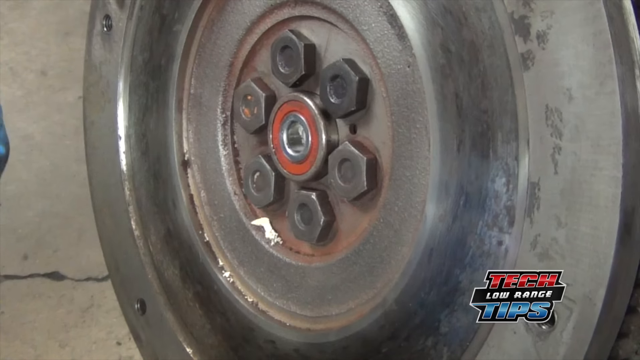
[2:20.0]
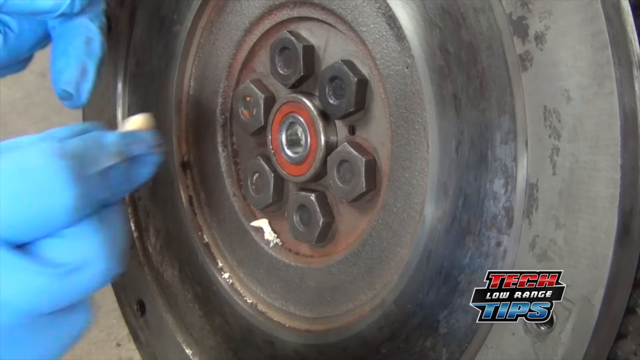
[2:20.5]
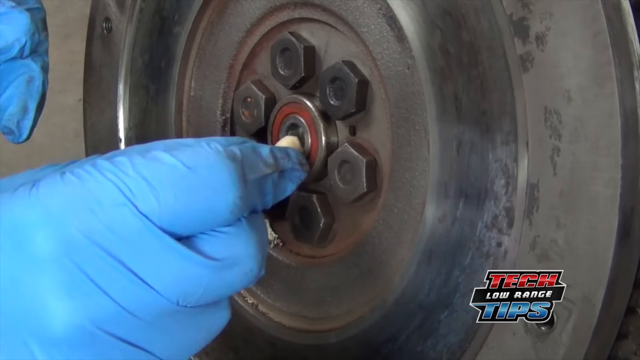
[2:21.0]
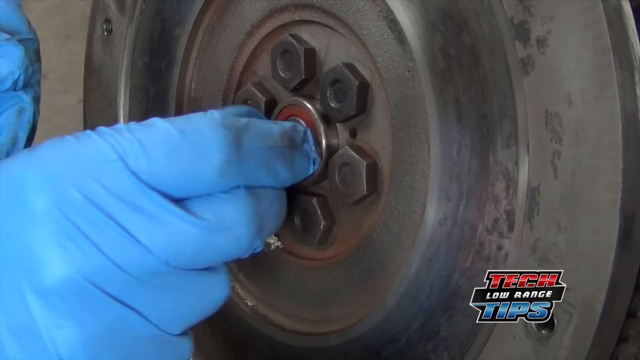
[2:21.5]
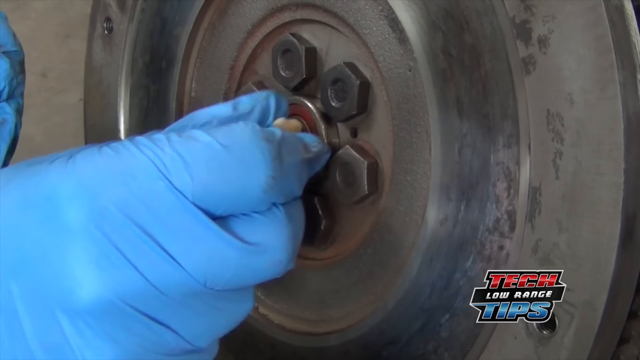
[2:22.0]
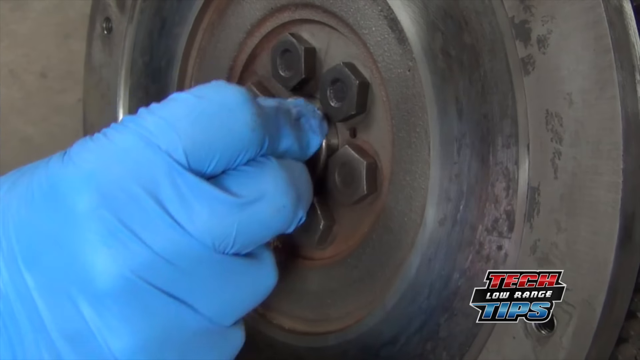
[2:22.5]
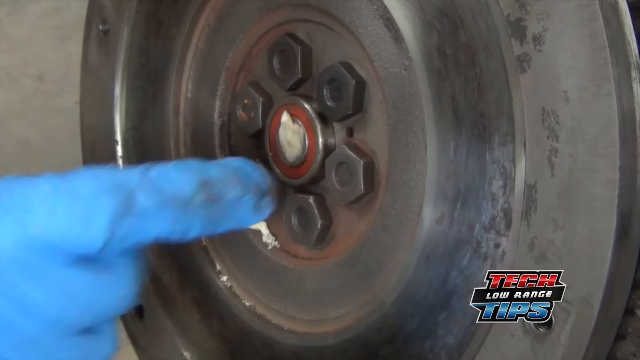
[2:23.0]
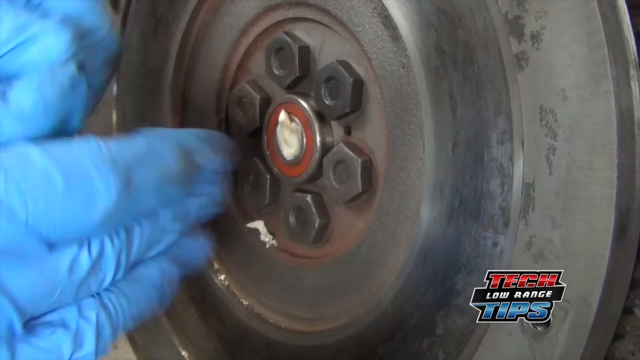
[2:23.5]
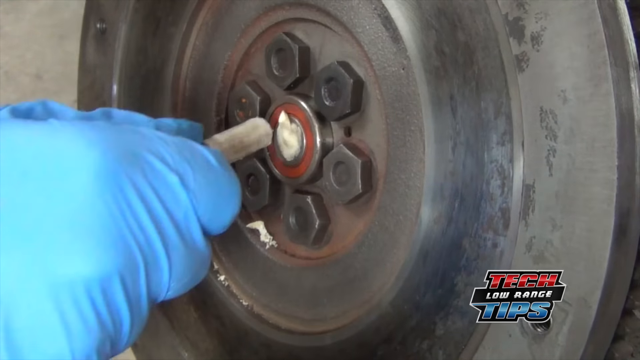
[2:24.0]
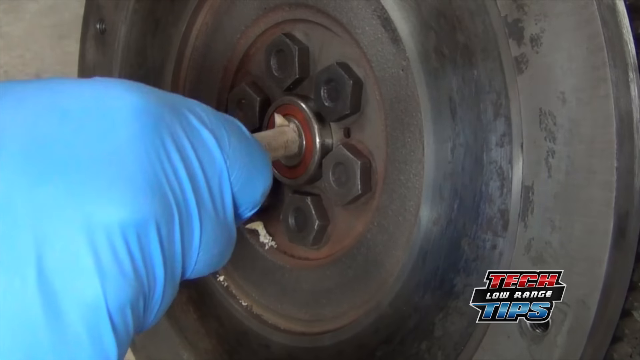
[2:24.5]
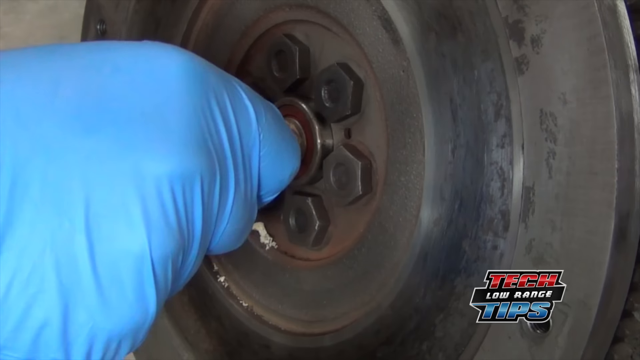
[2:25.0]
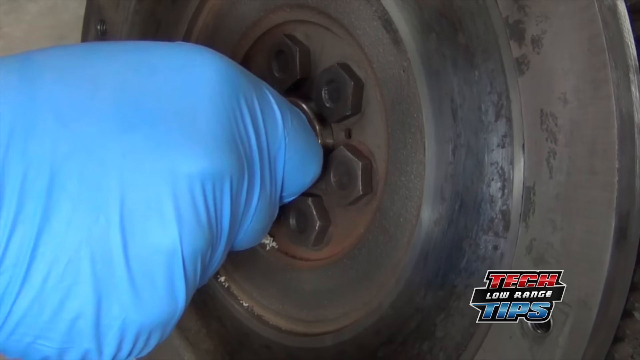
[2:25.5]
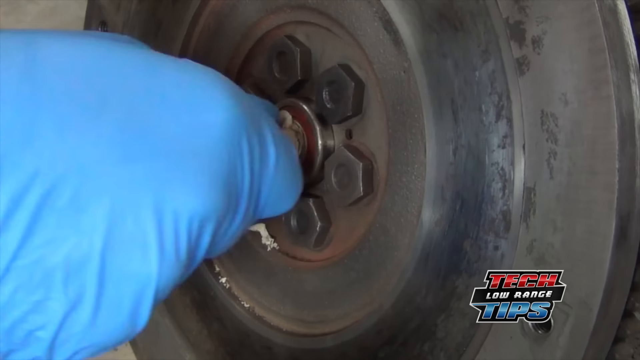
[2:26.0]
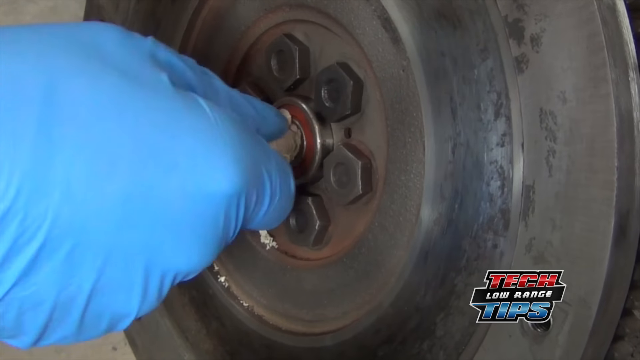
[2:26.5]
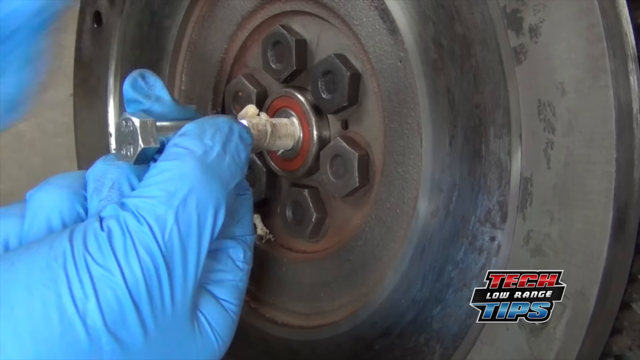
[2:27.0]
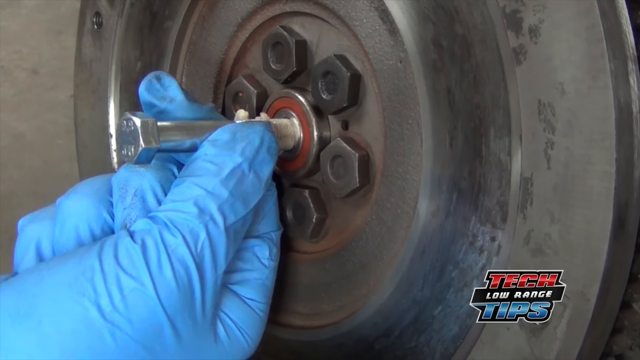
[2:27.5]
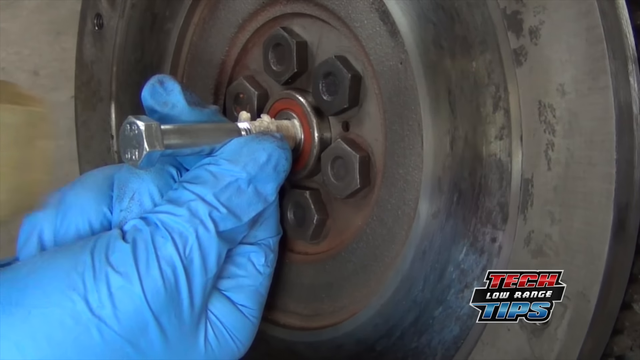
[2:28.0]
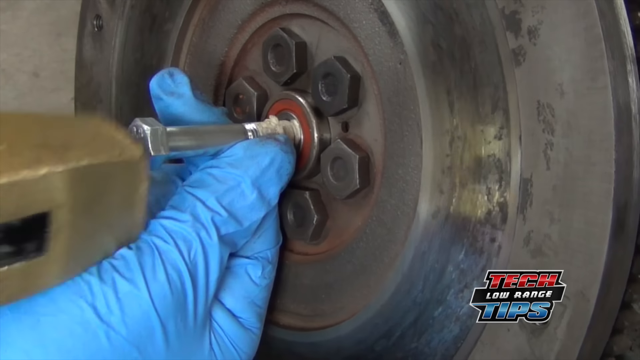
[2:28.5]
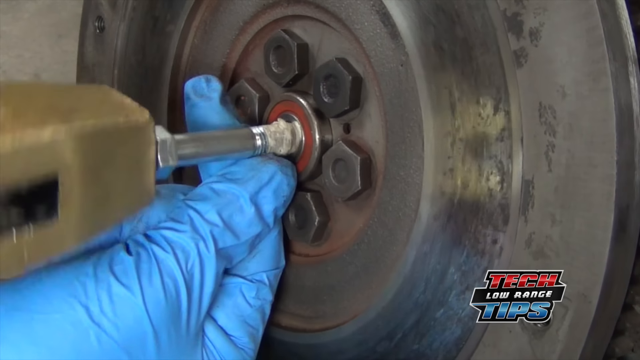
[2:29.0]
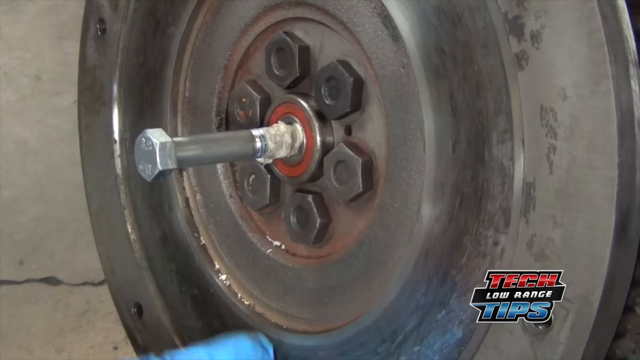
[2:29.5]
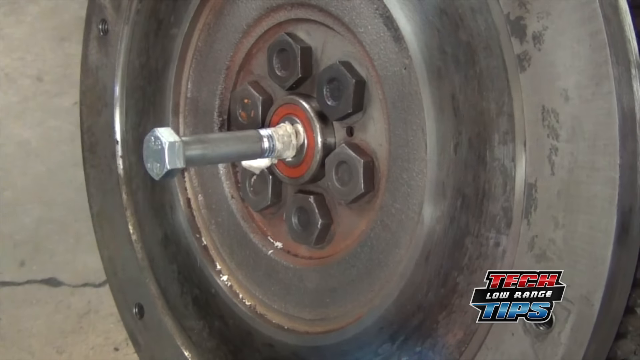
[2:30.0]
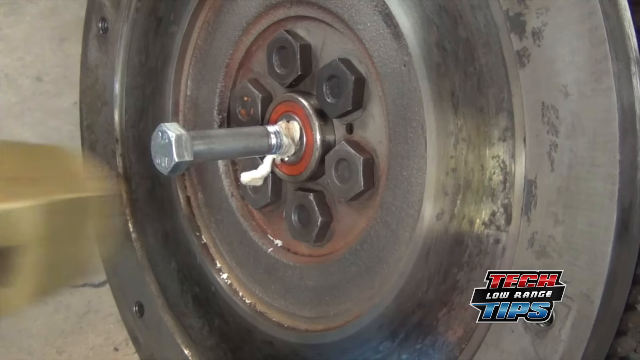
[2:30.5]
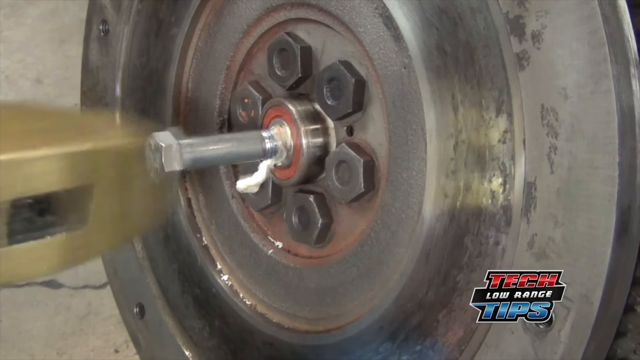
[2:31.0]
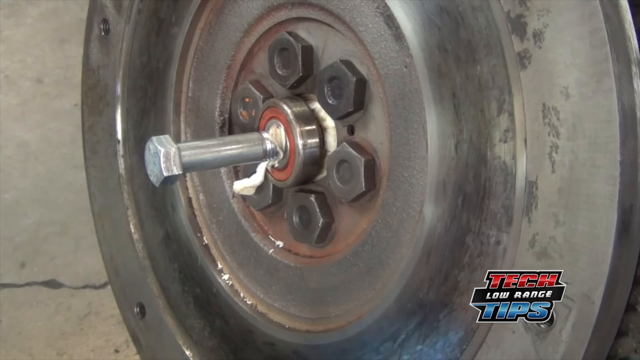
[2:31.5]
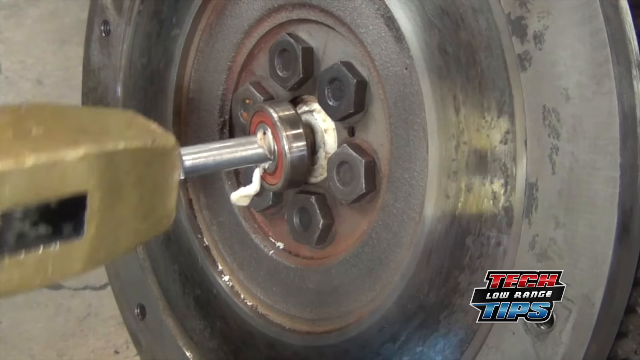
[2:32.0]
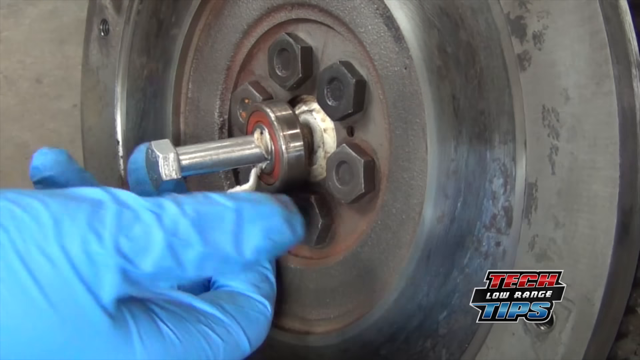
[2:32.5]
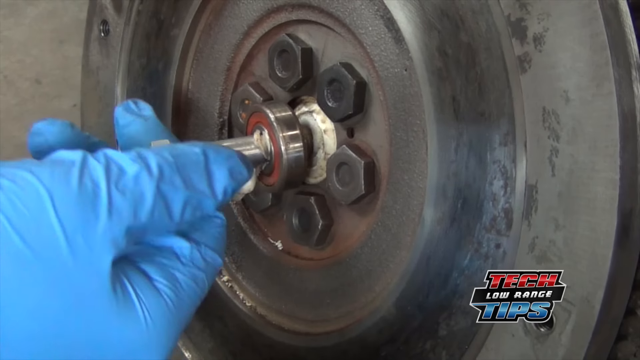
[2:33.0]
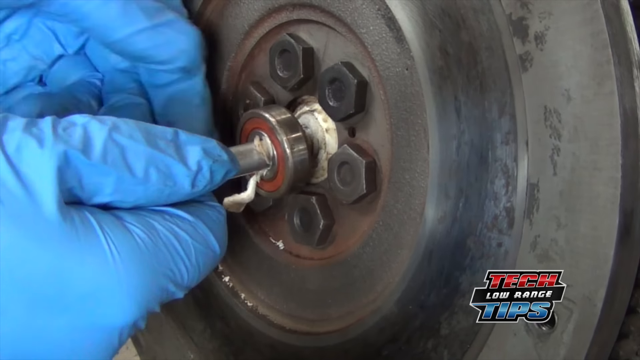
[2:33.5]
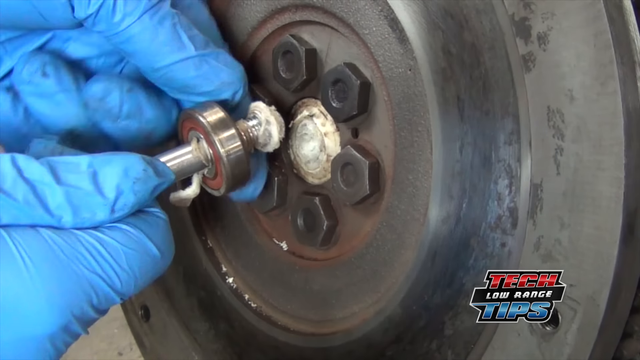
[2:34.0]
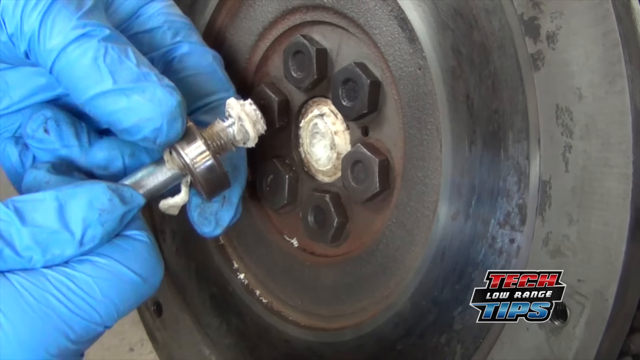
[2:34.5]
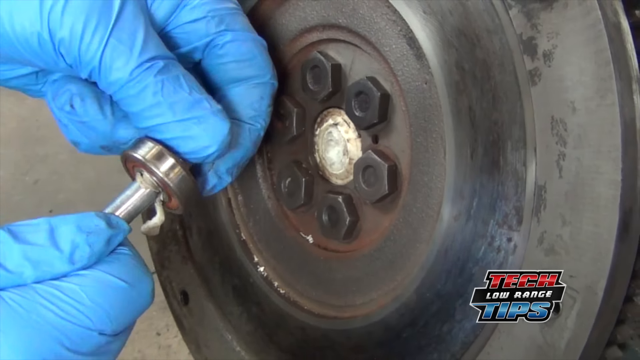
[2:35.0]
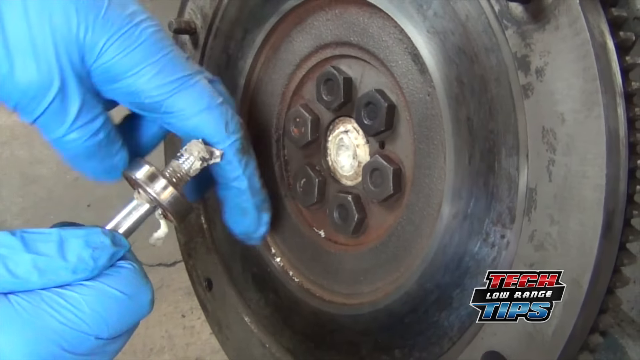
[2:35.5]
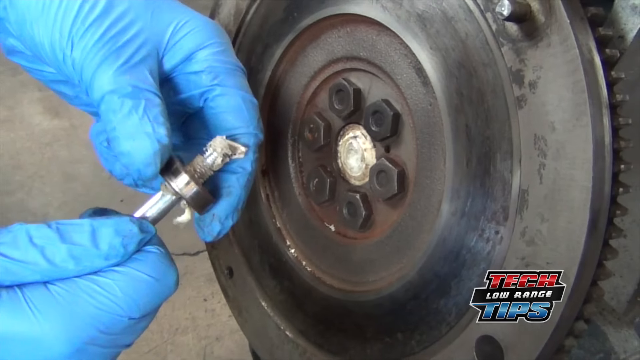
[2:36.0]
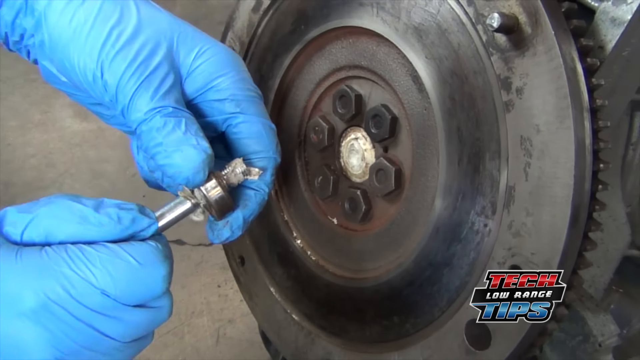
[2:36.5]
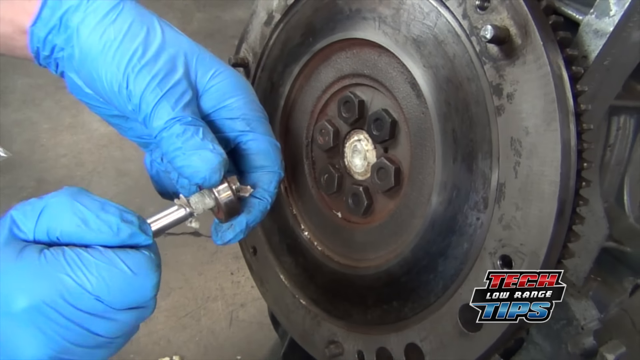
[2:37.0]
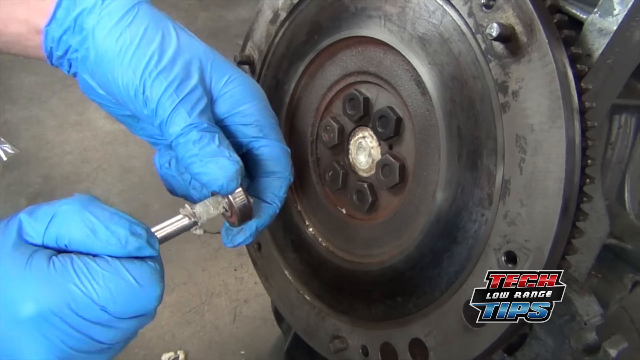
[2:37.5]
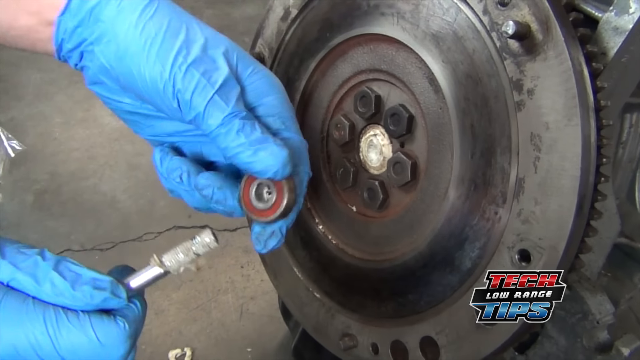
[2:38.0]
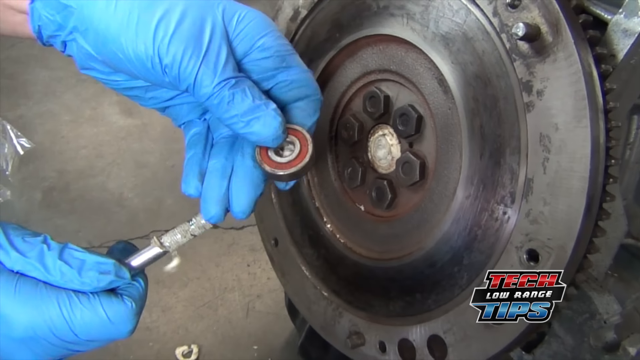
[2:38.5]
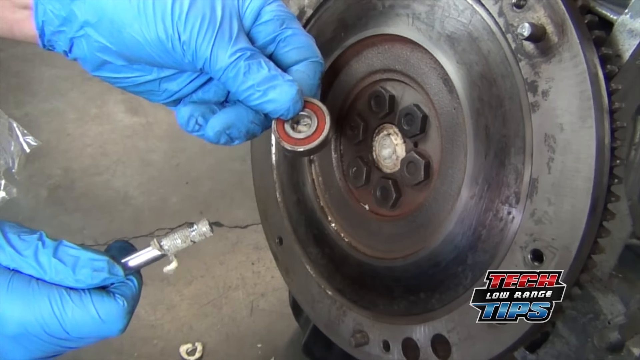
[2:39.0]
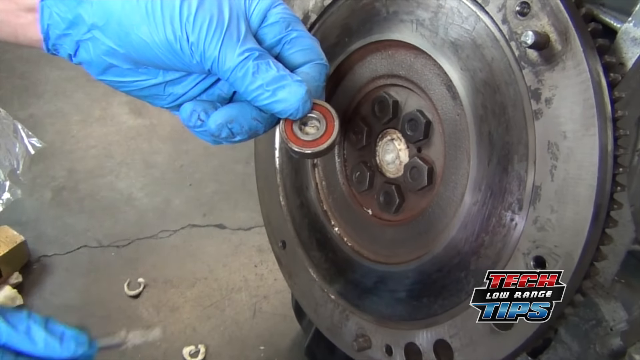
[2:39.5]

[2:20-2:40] The text "tech low range tips" appears. A circular metal object has about six nuts and a middle area. A man wearing blue gloves puts what looks like putty into the middle, then puts a screw inside and hammers it to drive the screw deeper, pushing the putty. He then uses a little tool to take off the nut piece that was originally in the middle.